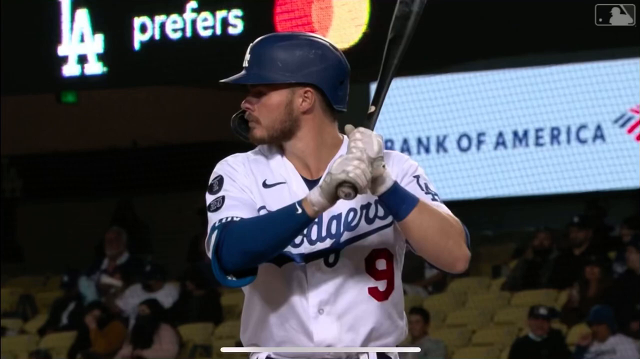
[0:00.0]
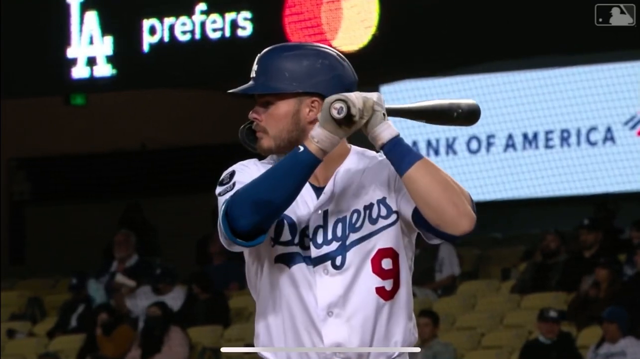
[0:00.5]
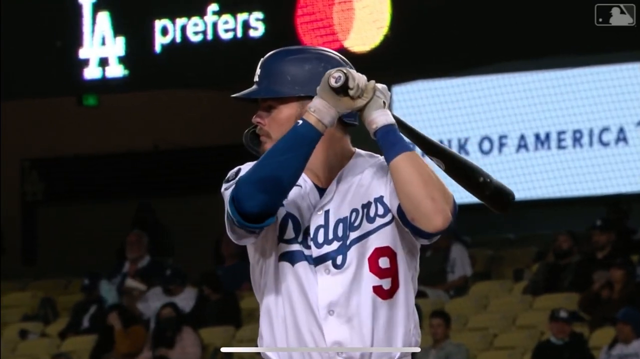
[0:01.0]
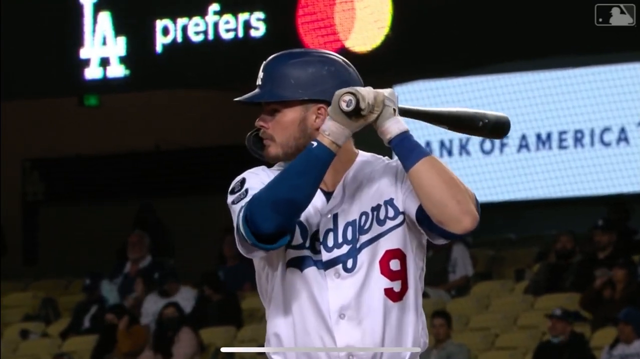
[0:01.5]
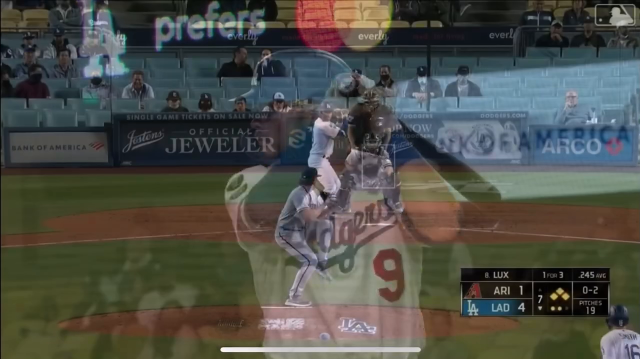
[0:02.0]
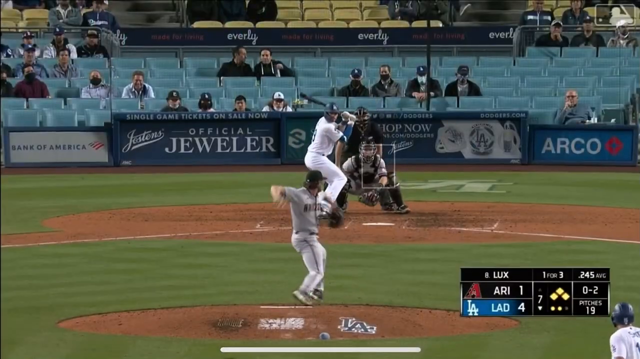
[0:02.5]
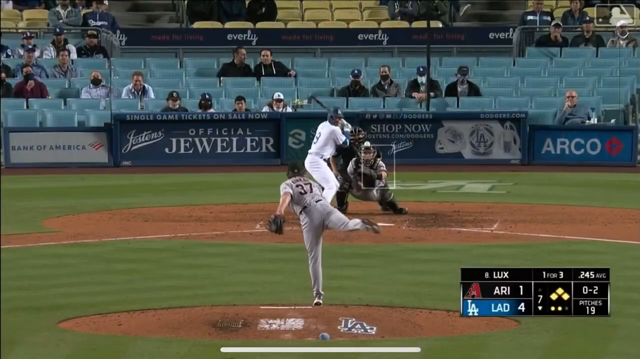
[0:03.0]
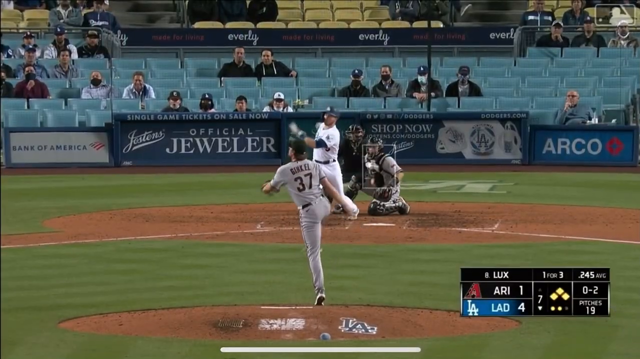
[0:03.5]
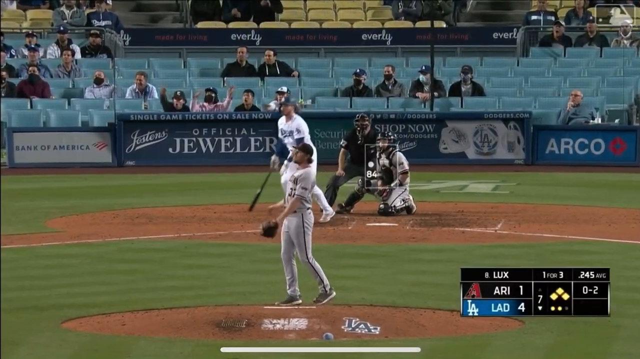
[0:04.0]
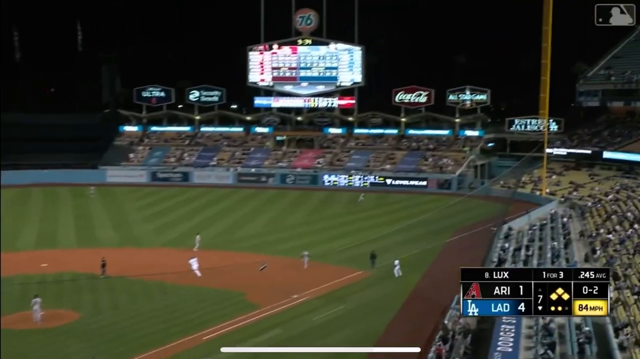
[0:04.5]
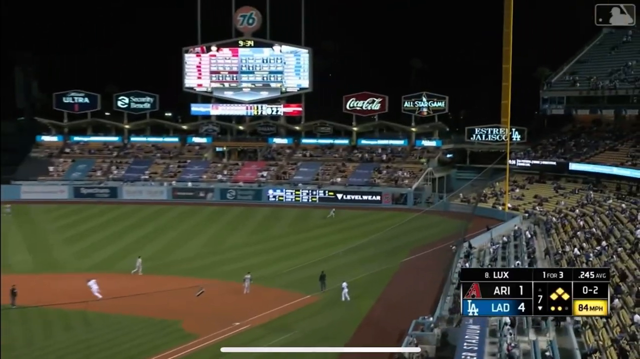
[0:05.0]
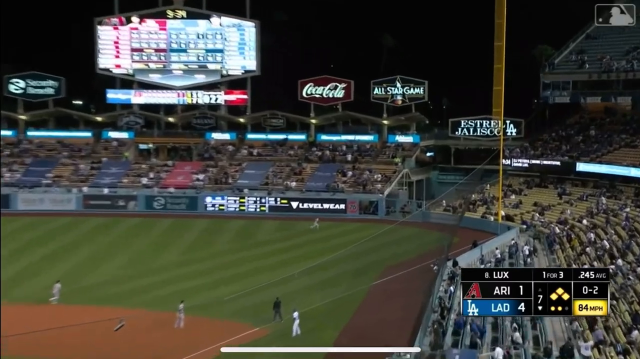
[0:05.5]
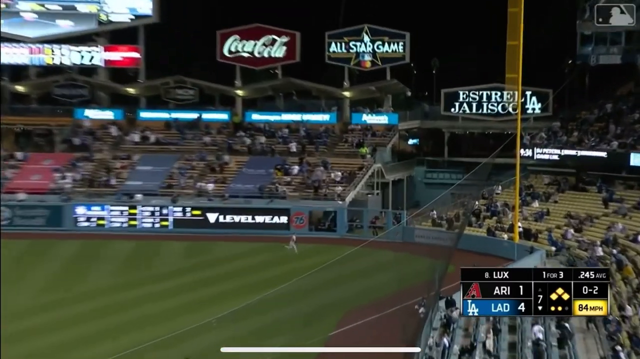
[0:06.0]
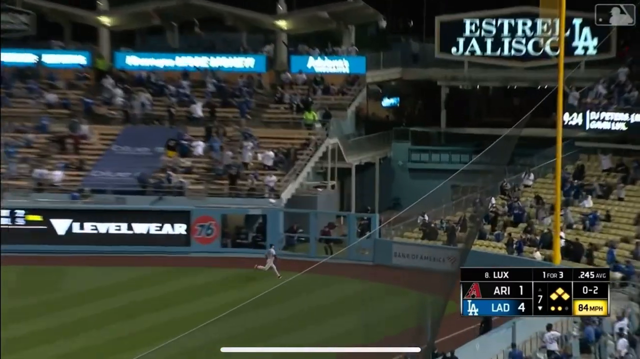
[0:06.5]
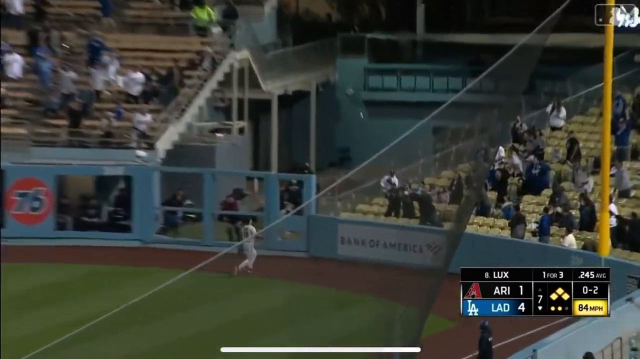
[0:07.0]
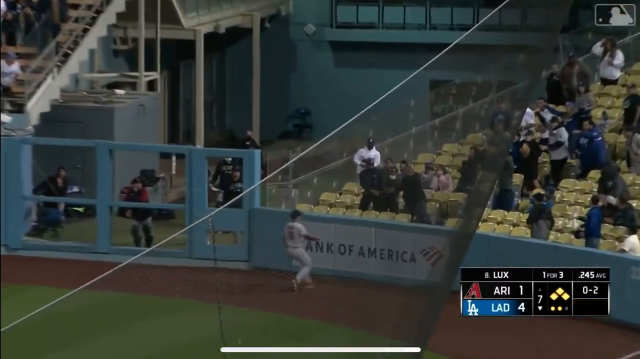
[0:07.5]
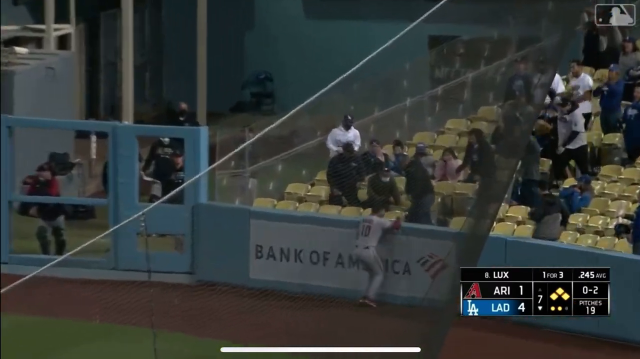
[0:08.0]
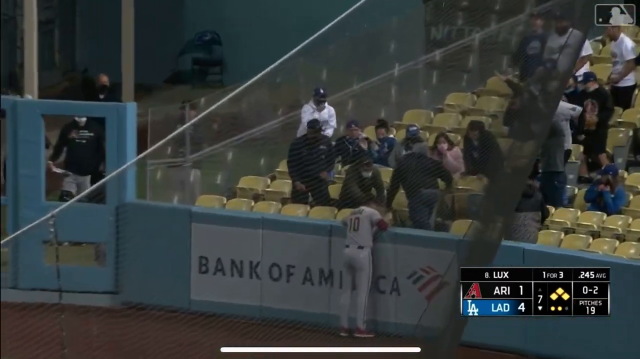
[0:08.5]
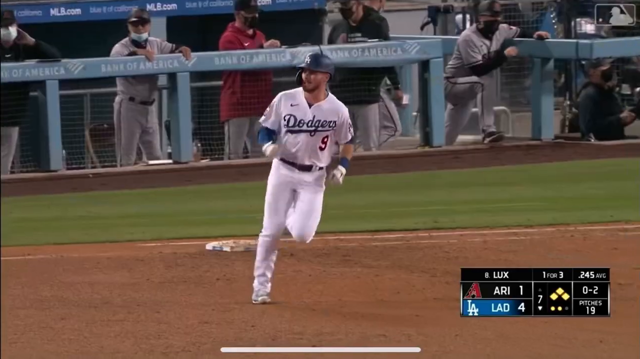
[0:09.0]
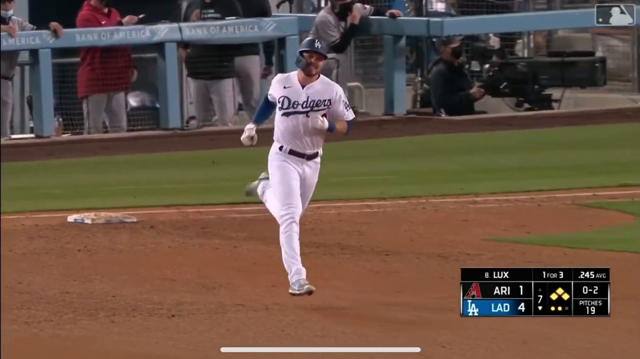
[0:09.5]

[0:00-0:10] A Los Angeles Dodgers player wearing number nine is apparently up to bat, holding a black bat with both hands. His body is seen from the front, but his head is turned to the side. Below him is a Bank of America sign and what looks like part of the stadium audience, though it is fairly dark. The view changes to a regular MLB broadcast angle showing the pitcher throwing the pitch and the batter behind the pitcher. In the bottom right corner, the scoreboard reads "Arizona 1 Los Angeles Dodgers 4." The bases appear to be loaded, and it is the bottom of the seventh inning. The Dodgers player hits the pitch right into the bottom row of the stands for a grand slam, and the player is briefly shown running.